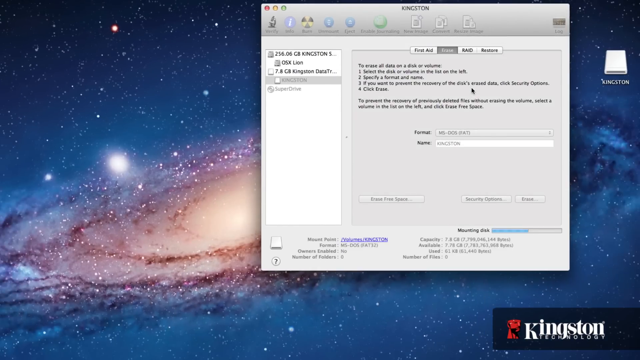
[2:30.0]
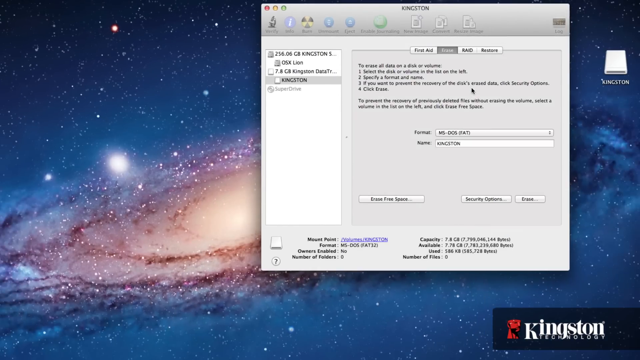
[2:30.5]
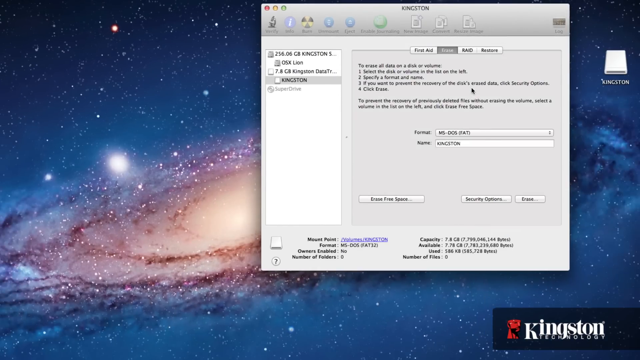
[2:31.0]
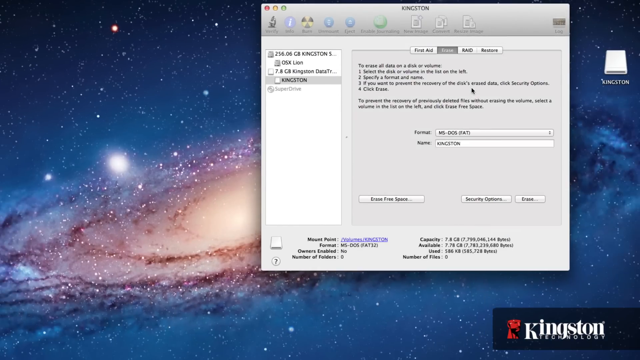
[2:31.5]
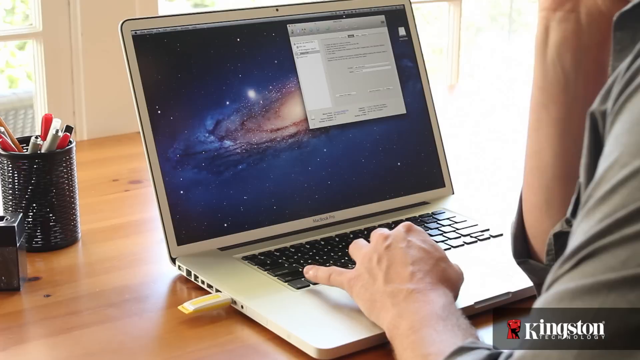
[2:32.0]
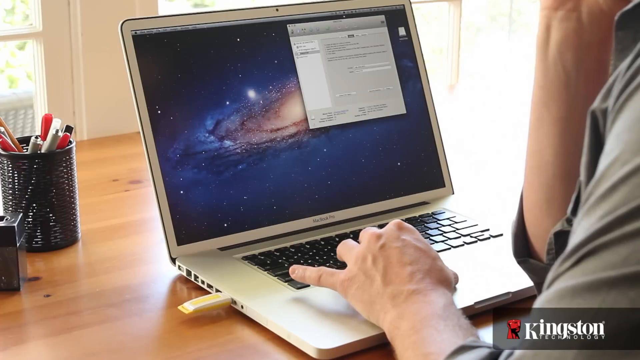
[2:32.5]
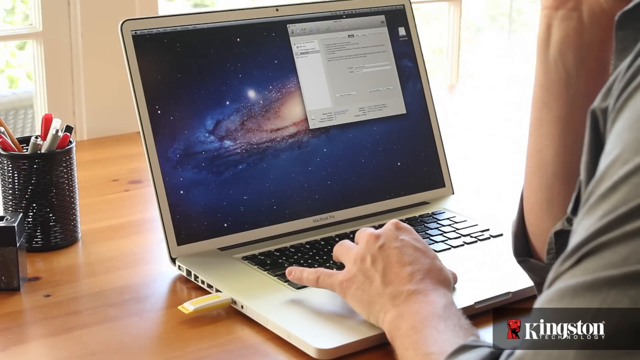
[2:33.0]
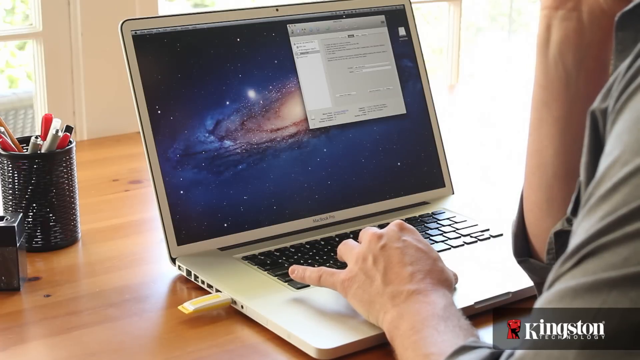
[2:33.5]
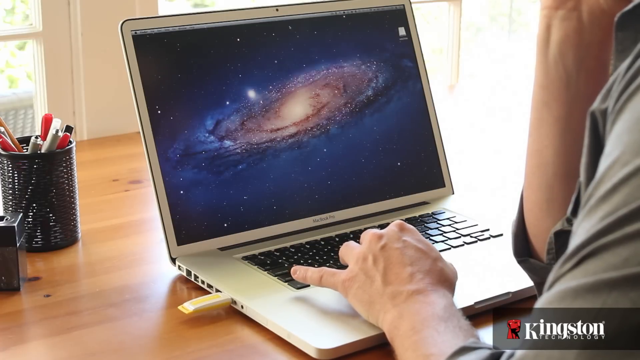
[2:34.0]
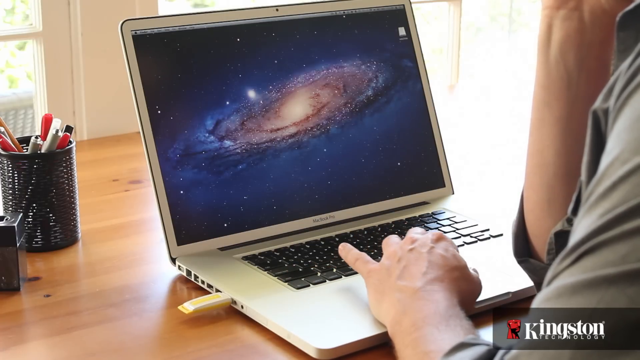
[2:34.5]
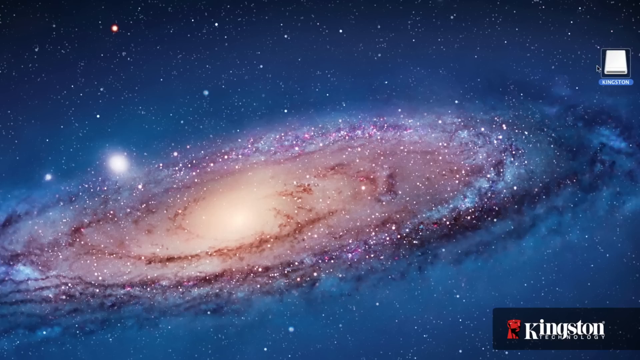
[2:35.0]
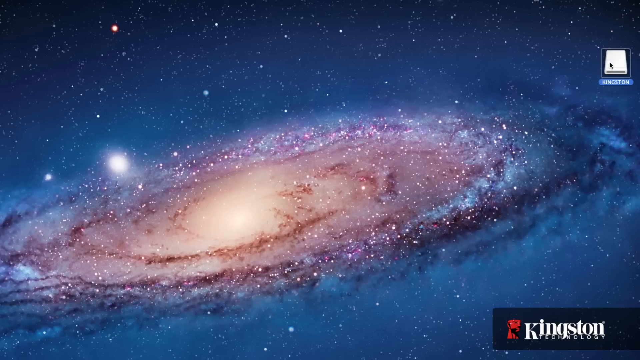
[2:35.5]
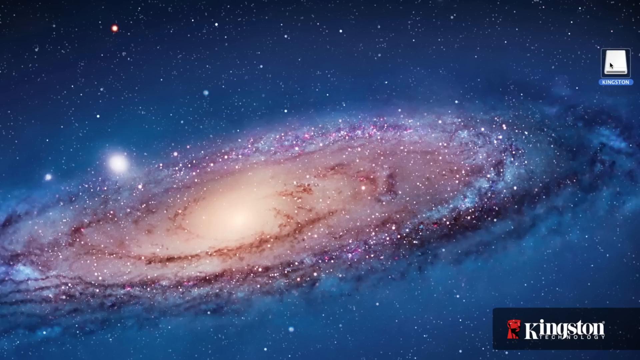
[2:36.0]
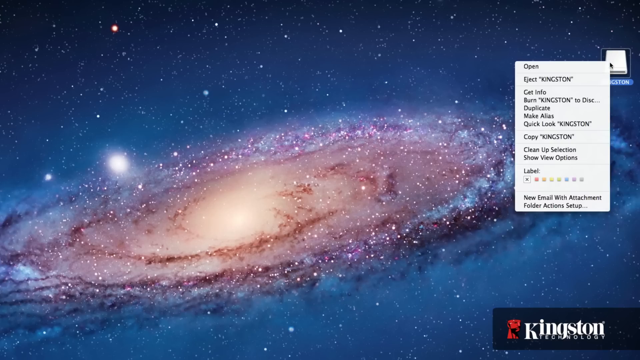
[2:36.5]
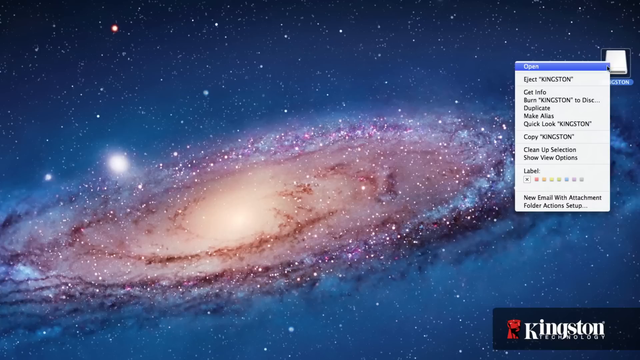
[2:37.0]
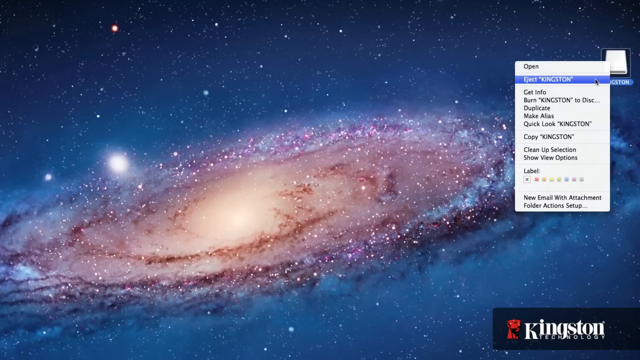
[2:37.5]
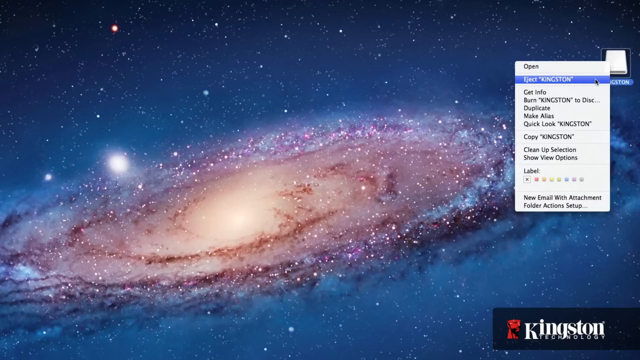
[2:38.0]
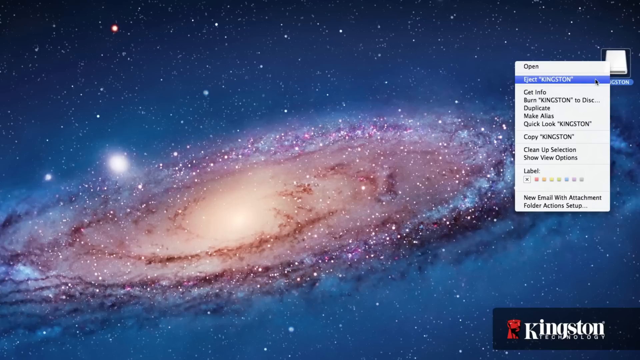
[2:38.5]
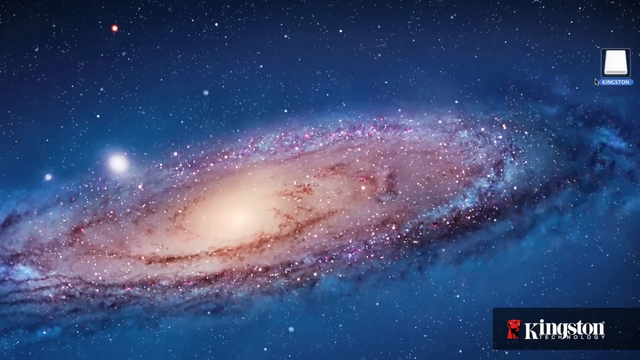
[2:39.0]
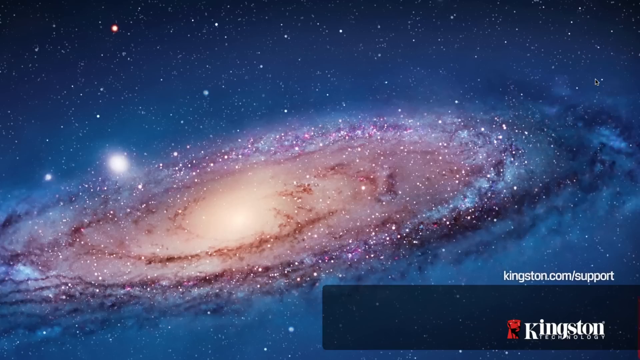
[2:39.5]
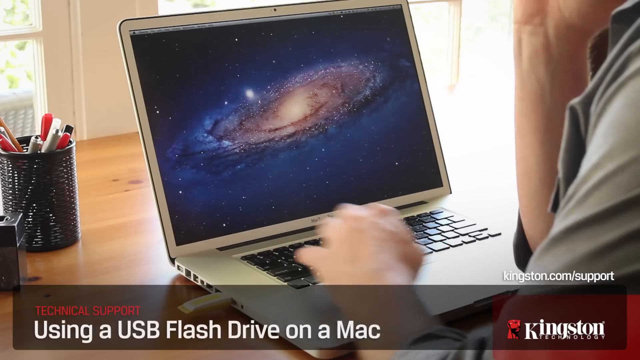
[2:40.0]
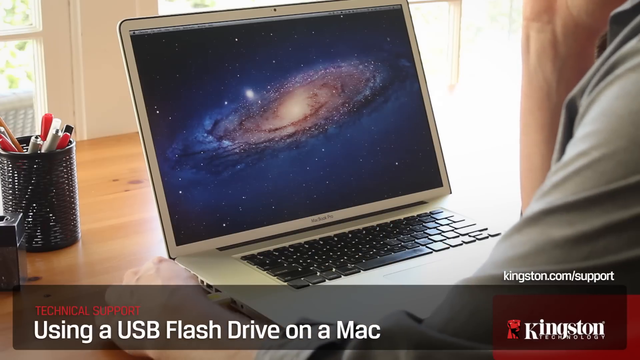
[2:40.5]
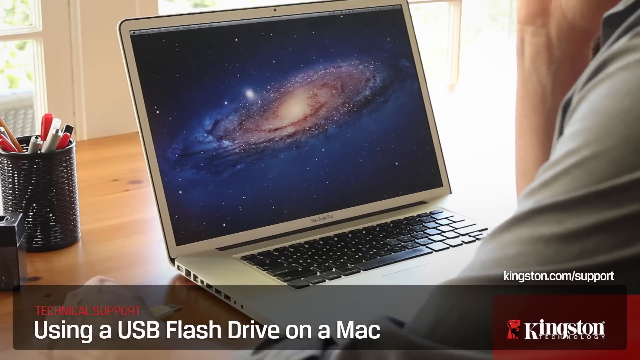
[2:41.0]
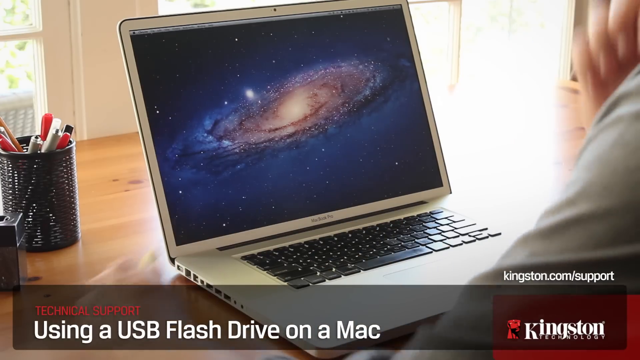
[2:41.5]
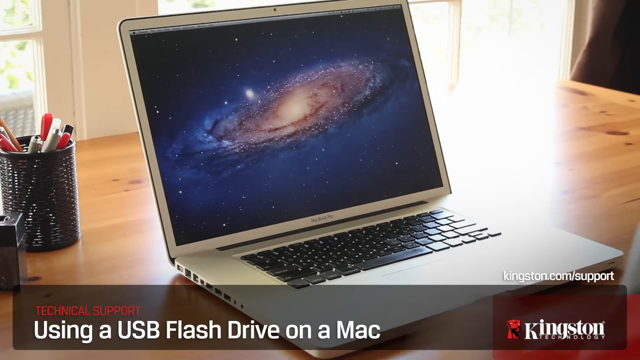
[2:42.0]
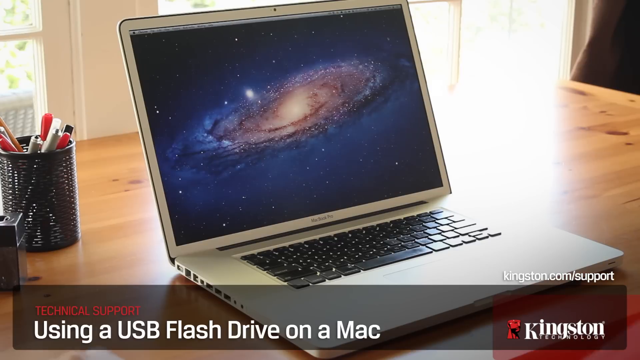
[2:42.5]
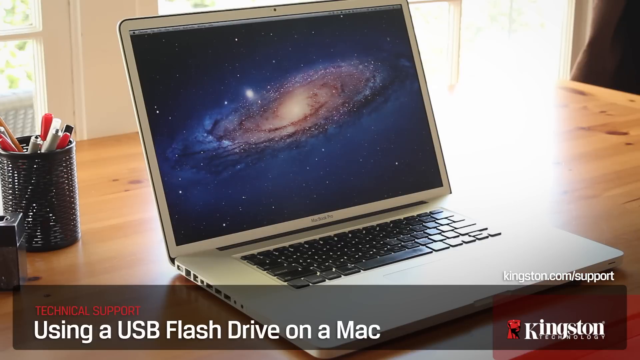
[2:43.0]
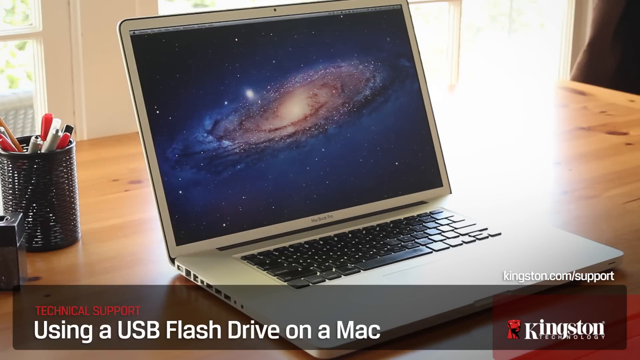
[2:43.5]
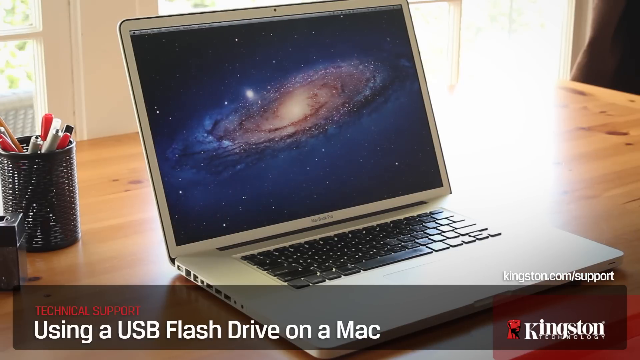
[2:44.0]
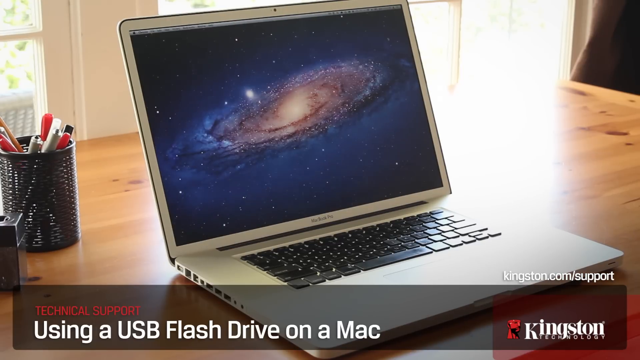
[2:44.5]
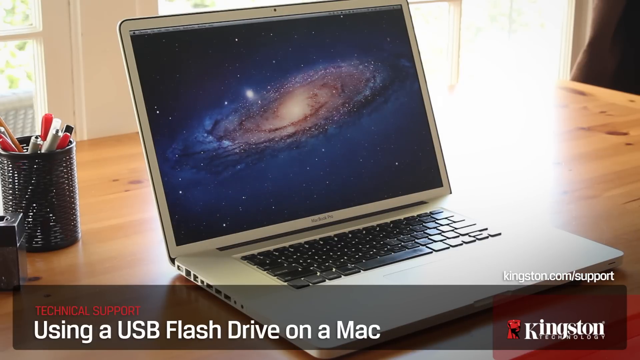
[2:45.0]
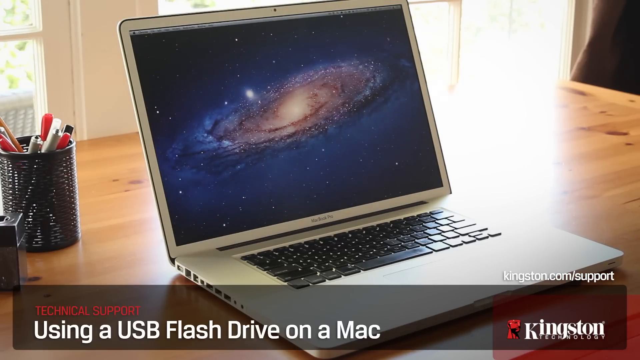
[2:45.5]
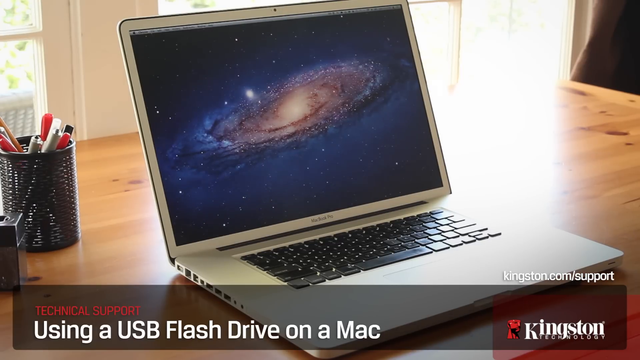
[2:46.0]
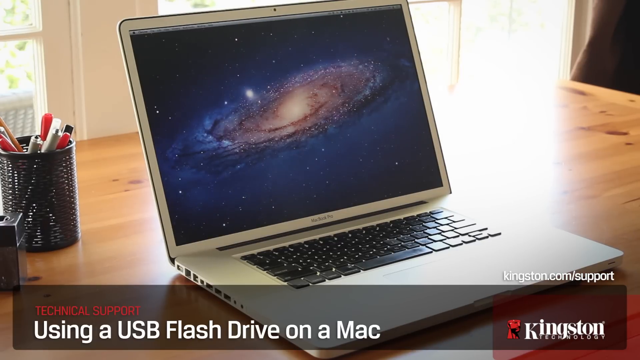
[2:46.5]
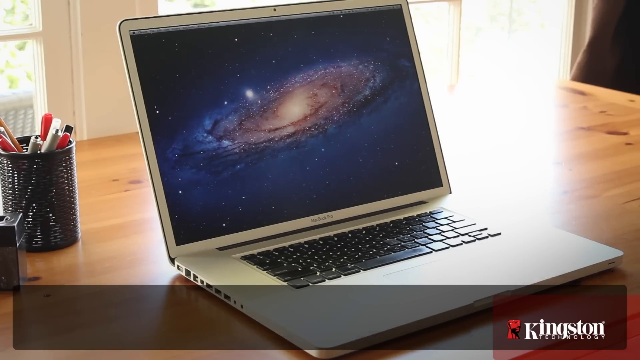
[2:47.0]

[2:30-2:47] A box is open on the computer where erase has been clicked to remove documents from the Kingston stick drive. The person then shows his hand holding the Kingston drive to eject it, and pulls it out with his left hand. Text reads "using a USB port," and then "using a USB flash drive on a Mac" along with "Kingston.com/support." The person pulls the drive out.